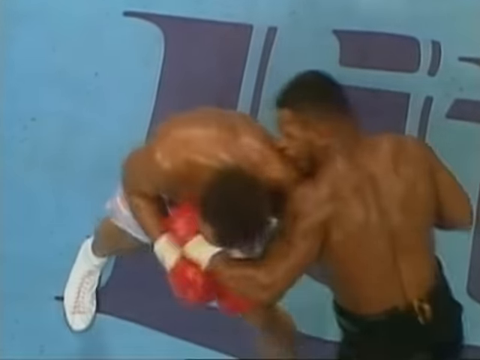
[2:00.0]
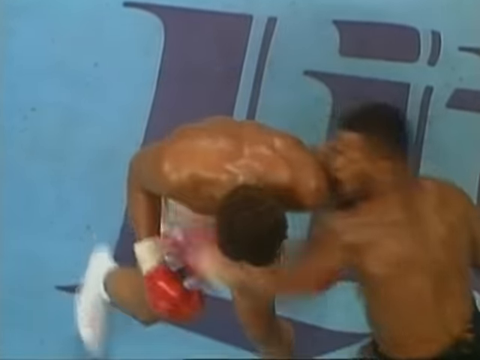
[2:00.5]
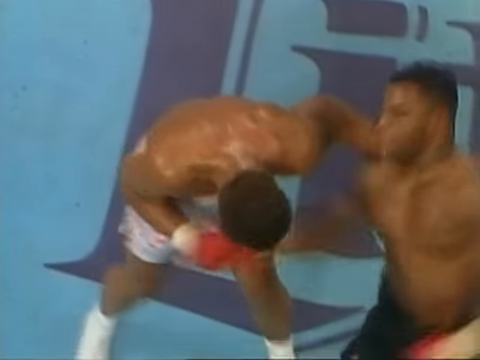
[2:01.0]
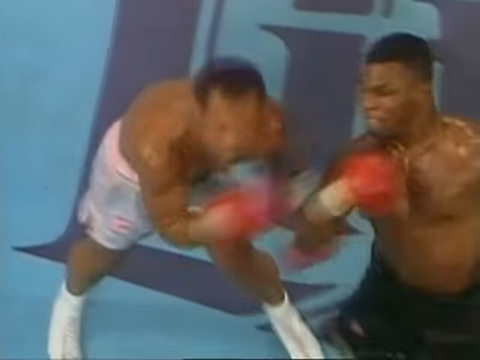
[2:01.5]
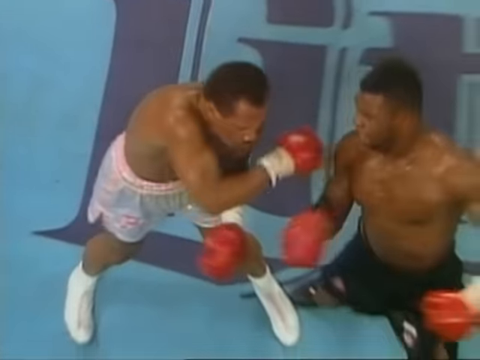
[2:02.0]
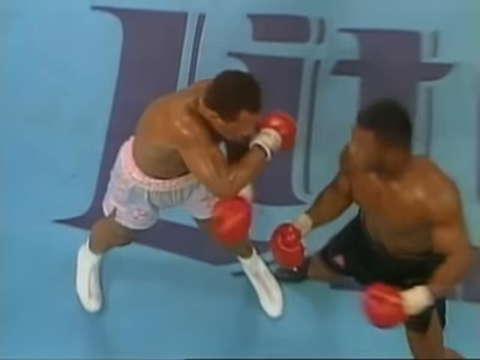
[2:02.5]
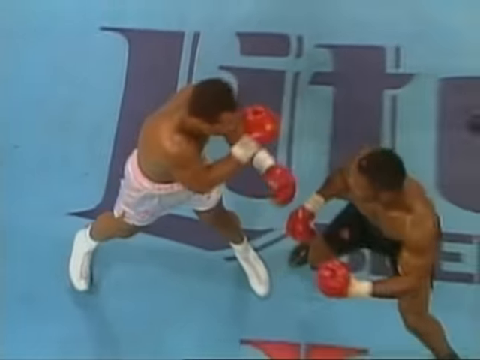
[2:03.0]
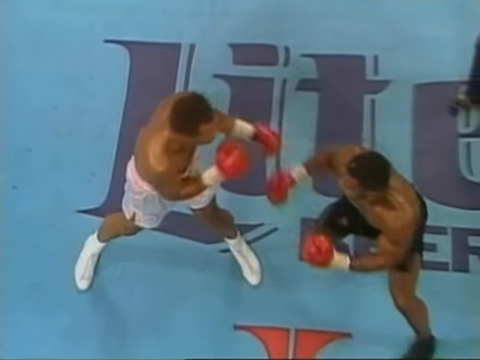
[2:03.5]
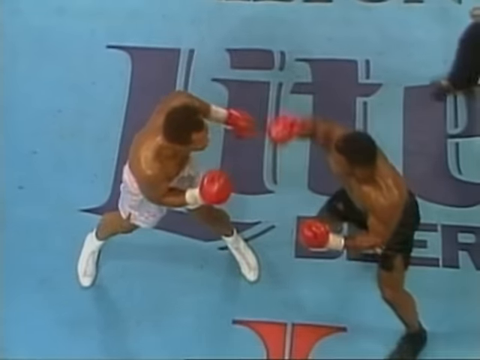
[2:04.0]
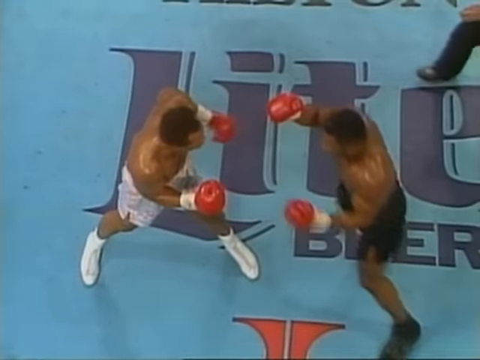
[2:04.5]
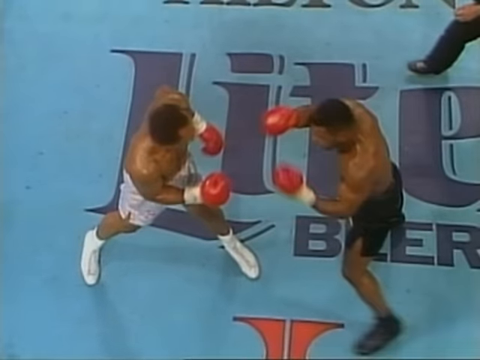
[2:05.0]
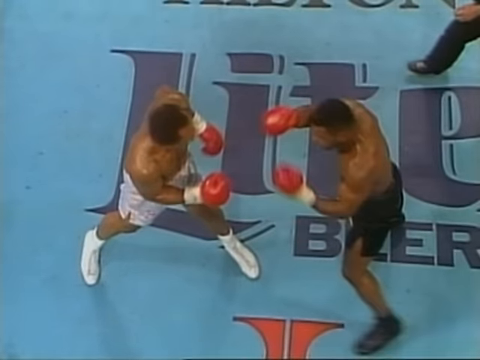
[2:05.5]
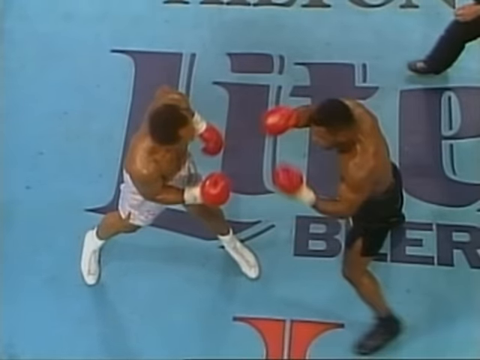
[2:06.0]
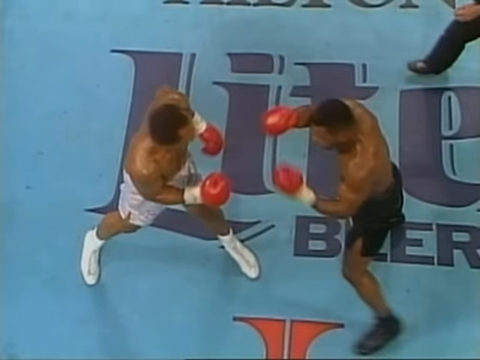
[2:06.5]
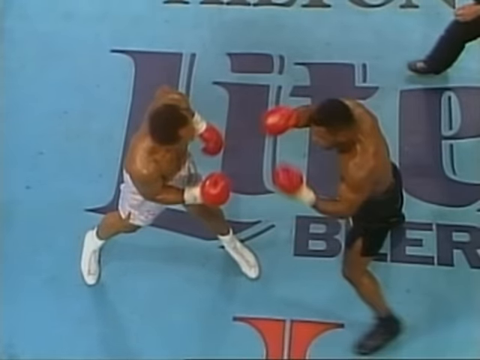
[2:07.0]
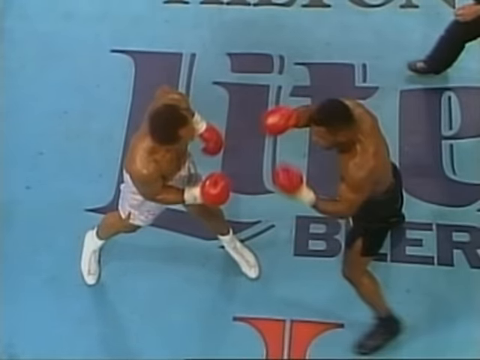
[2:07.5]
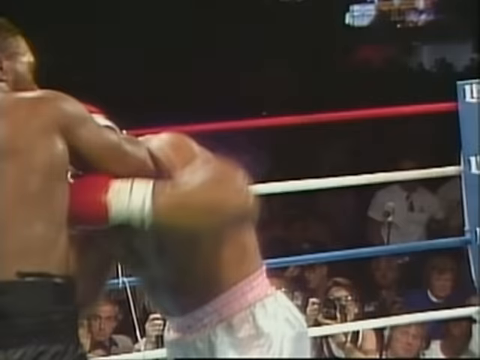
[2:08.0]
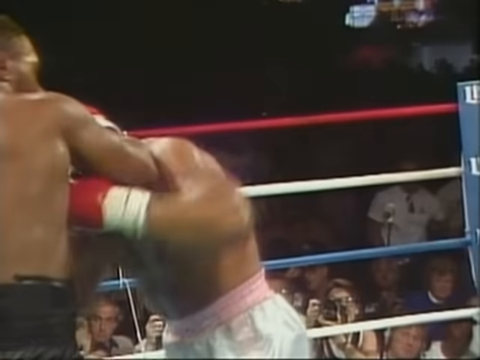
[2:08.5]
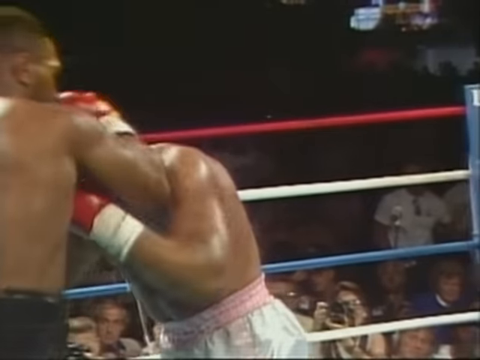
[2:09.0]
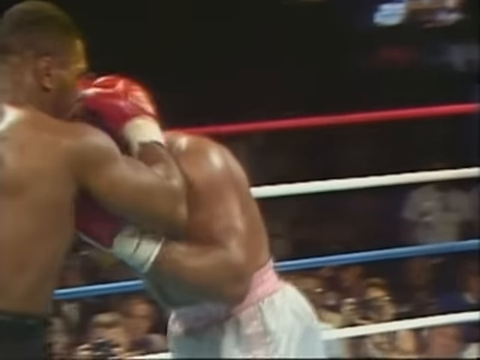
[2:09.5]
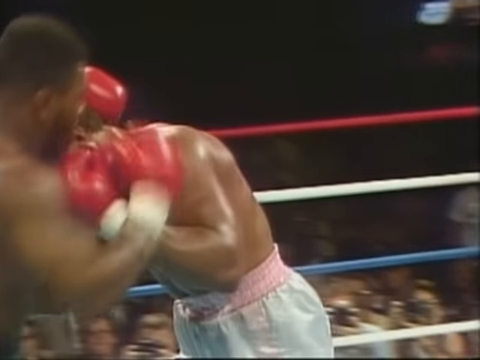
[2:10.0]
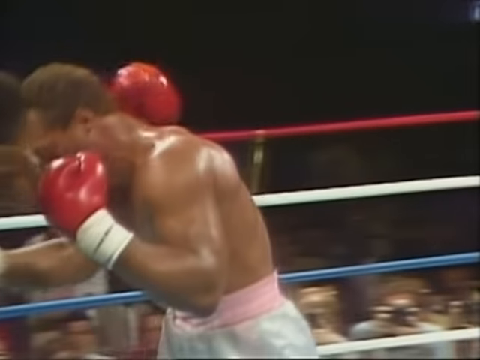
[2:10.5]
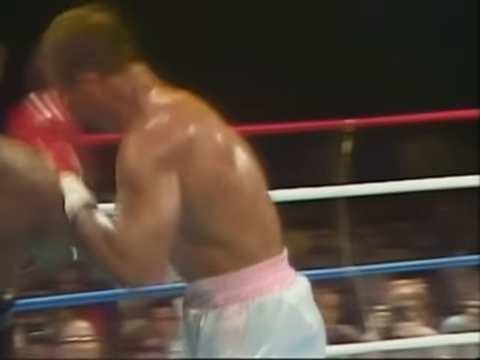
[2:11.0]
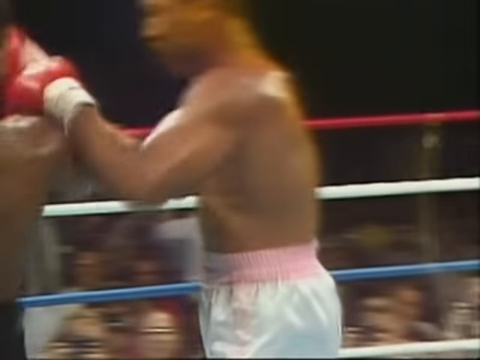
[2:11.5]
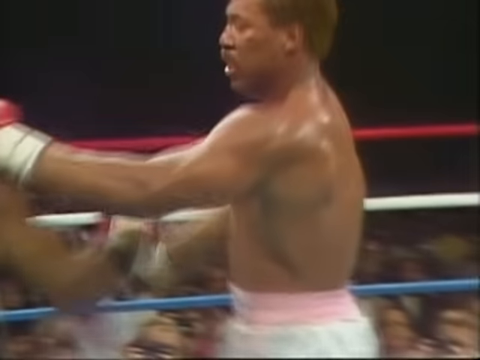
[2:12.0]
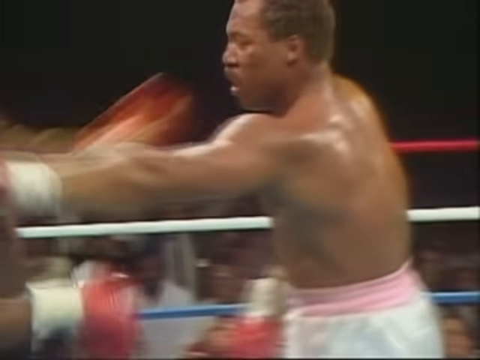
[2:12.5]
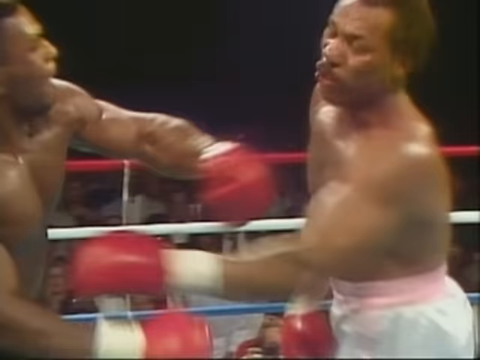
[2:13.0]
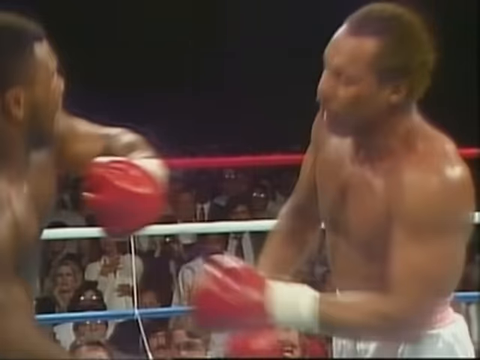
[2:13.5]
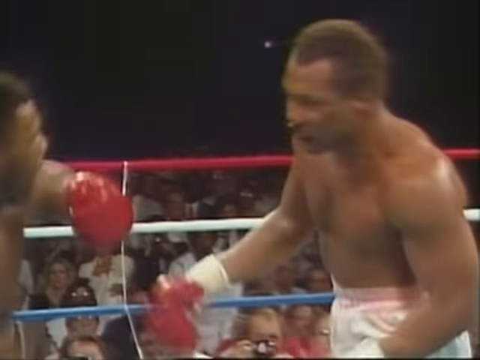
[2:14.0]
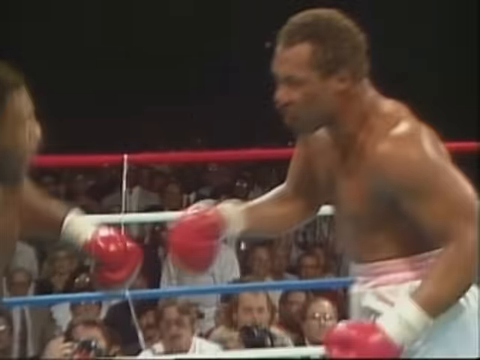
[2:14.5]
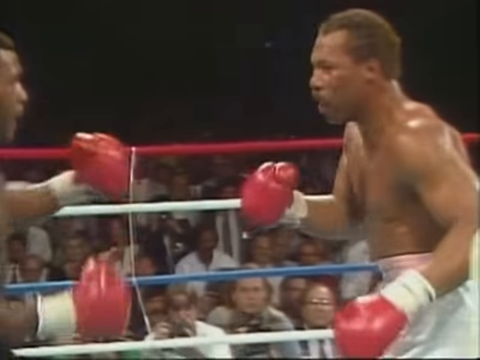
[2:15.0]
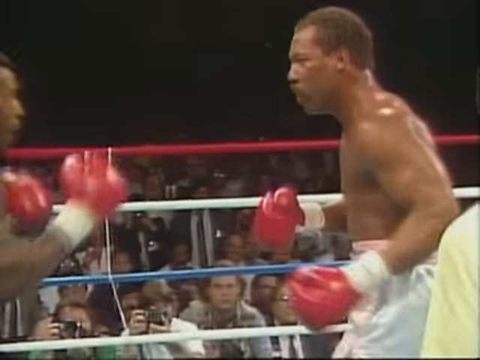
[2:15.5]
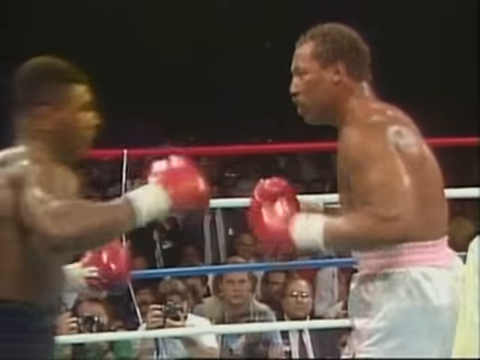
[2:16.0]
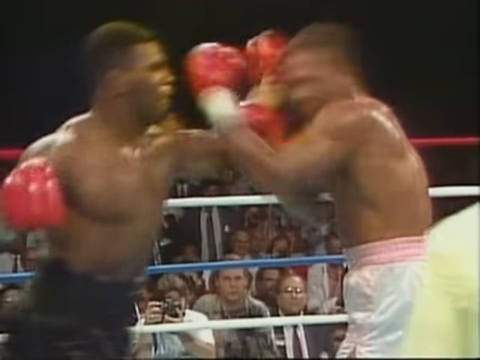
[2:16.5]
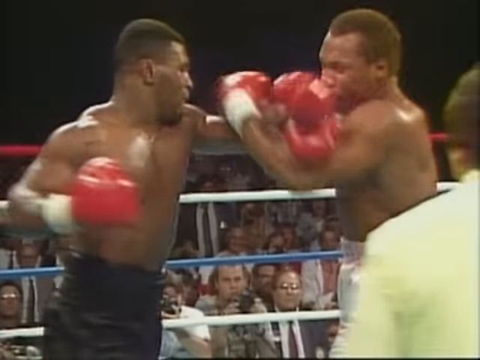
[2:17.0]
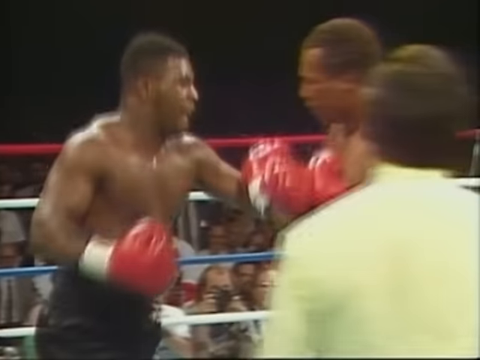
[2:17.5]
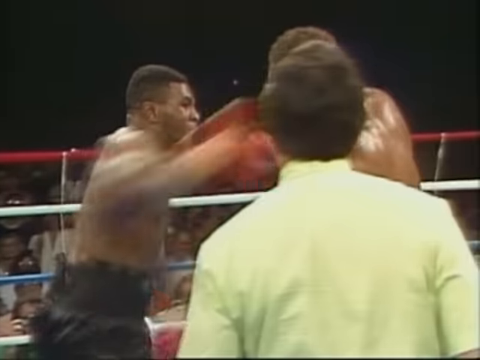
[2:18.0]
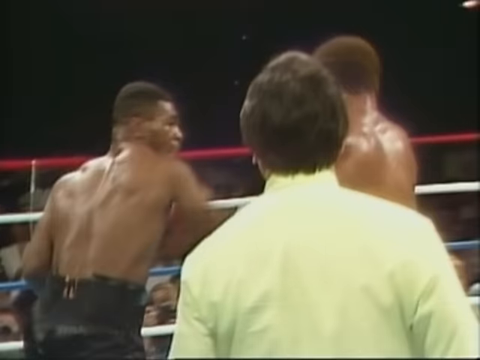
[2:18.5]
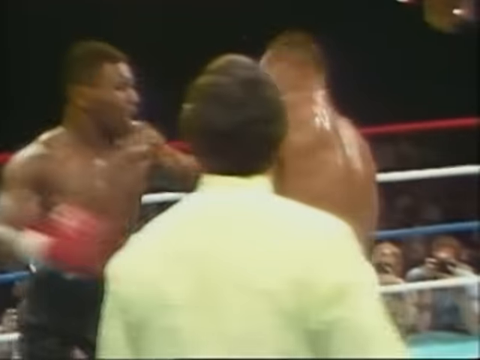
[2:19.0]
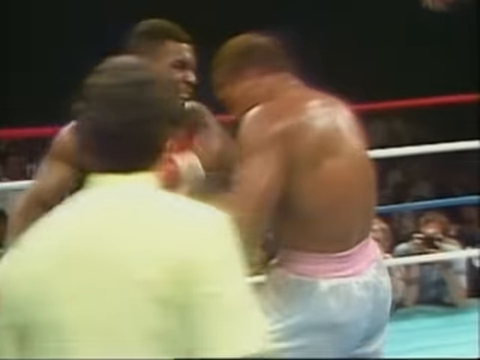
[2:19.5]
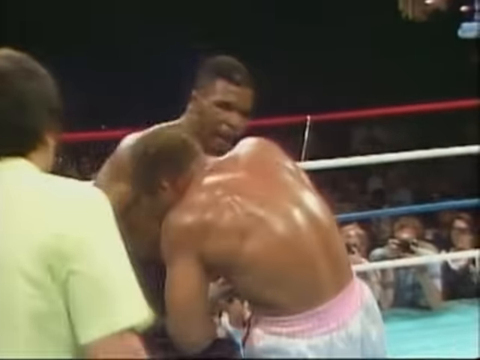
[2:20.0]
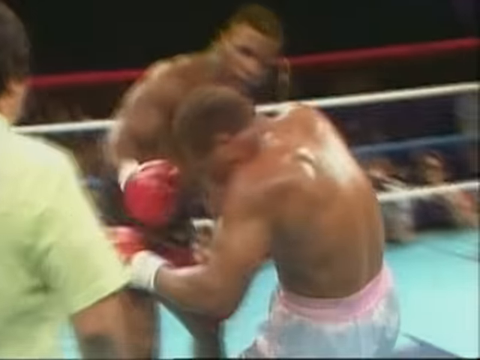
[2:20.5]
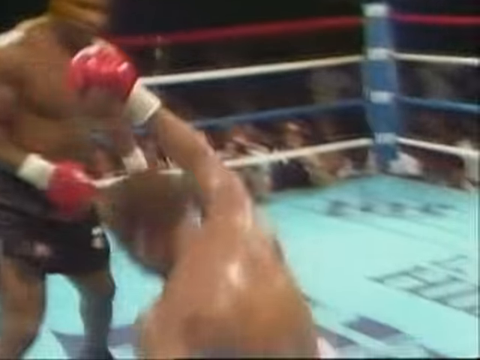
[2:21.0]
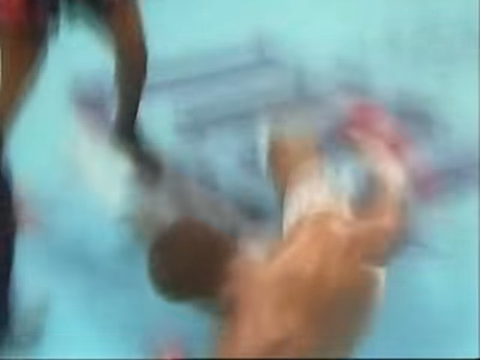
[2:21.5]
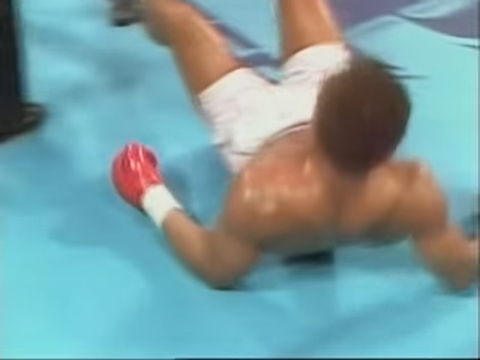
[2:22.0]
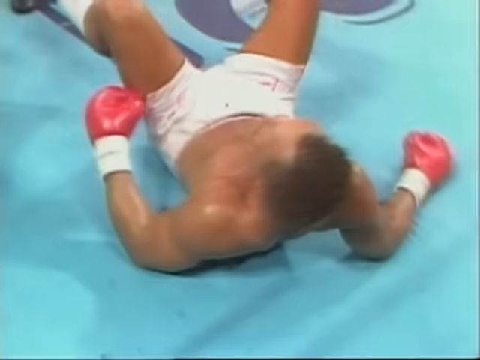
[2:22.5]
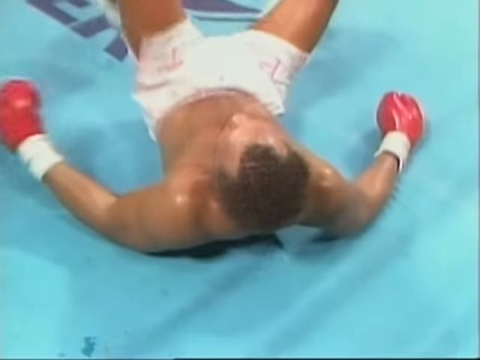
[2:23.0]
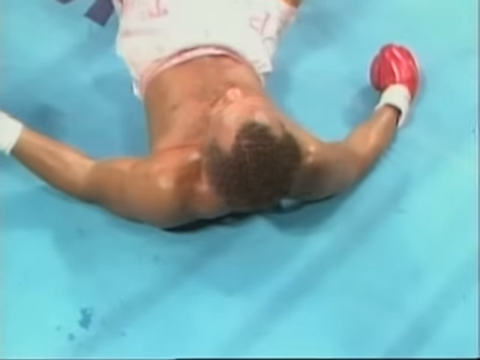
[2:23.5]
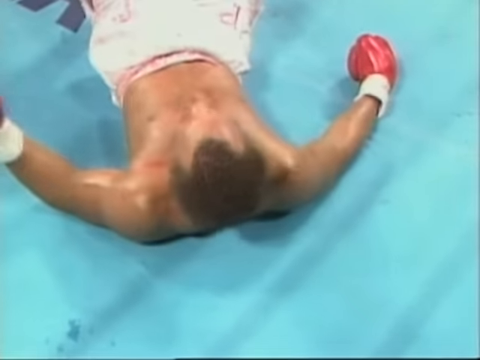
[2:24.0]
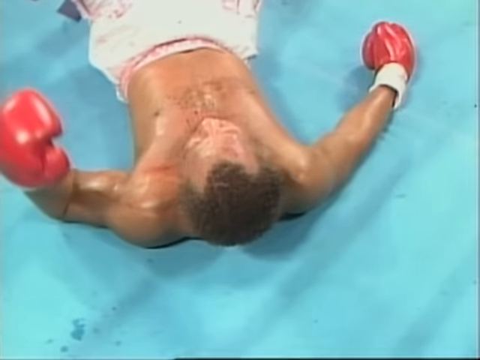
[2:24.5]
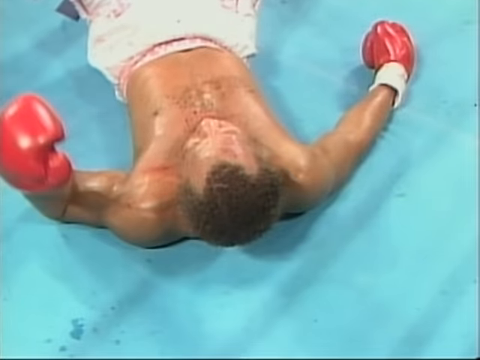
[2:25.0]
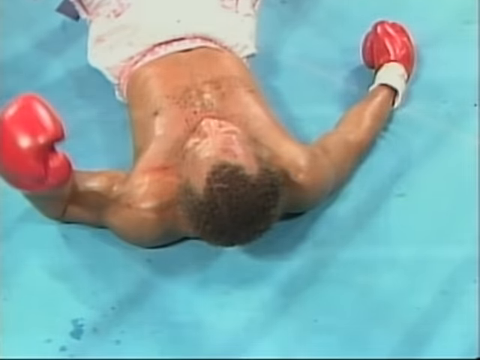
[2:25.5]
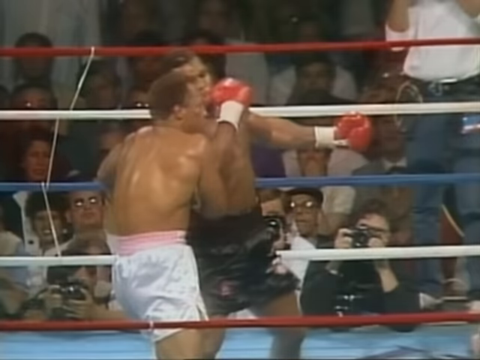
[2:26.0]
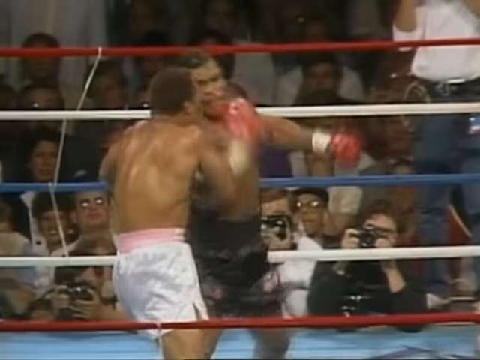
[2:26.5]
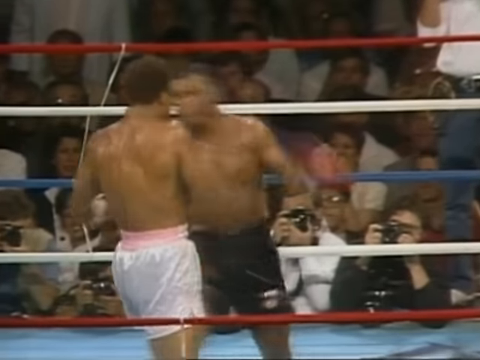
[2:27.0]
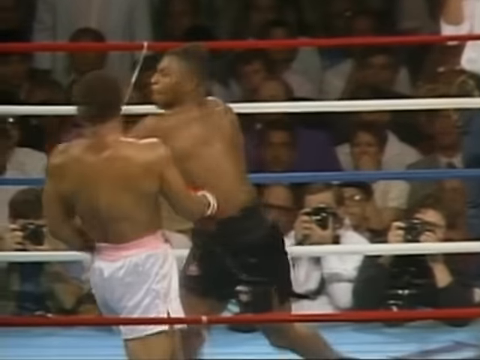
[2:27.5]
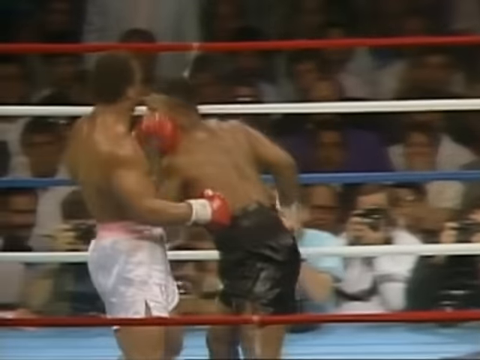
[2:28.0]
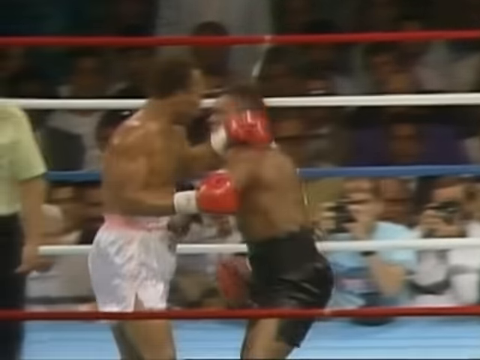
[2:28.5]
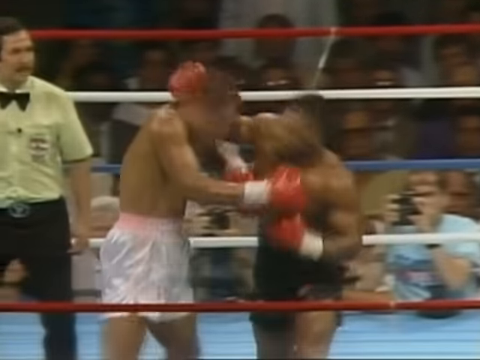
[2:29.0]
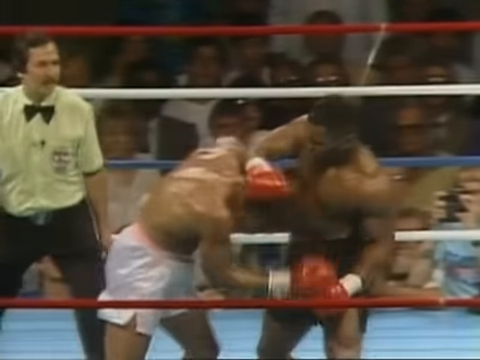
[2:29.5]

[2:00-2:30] A slow-motion replay shows the fight from directly overhead, with Tyson on the right and the defeated boxer on the left. Tyson lands a hard uppercut that hits the other boxer right in the chin, then backs up a second as if planning his next punch, and the footage pauses. It transitions to a different angle at roughly ground level, even with the boxers, from behind Tyson. Tyson is holding the boxer, then backs up, throws the uppercut, follows right away with a left hook, then another hook, and the boxer goes down, all in slow motion.